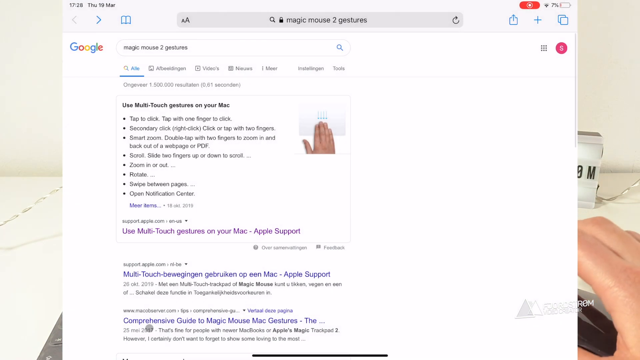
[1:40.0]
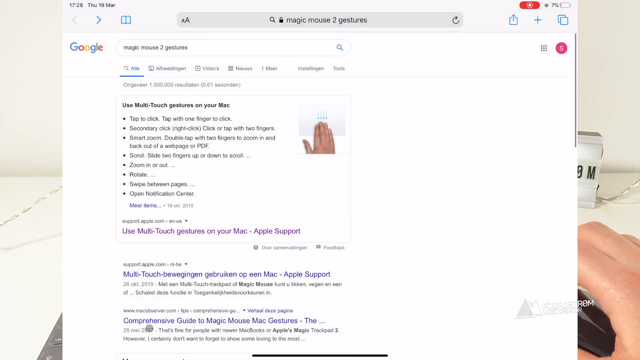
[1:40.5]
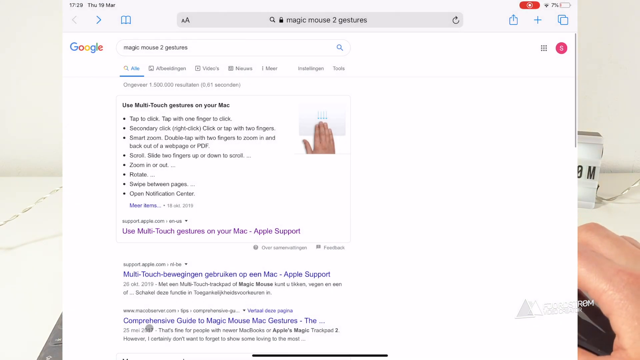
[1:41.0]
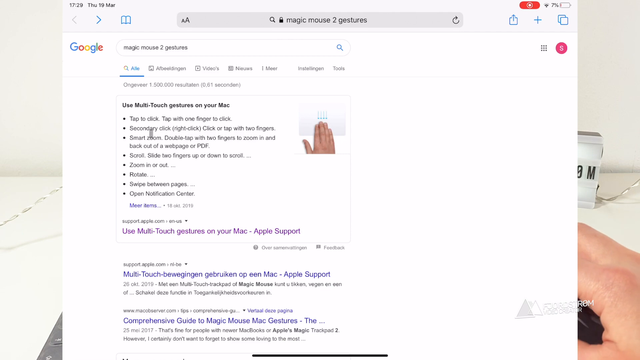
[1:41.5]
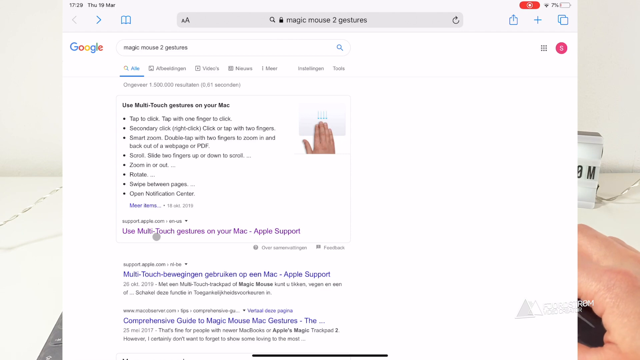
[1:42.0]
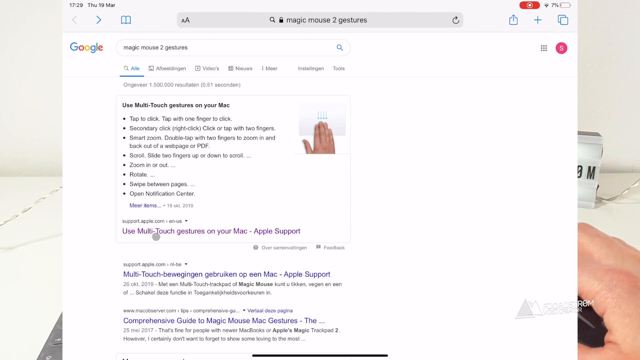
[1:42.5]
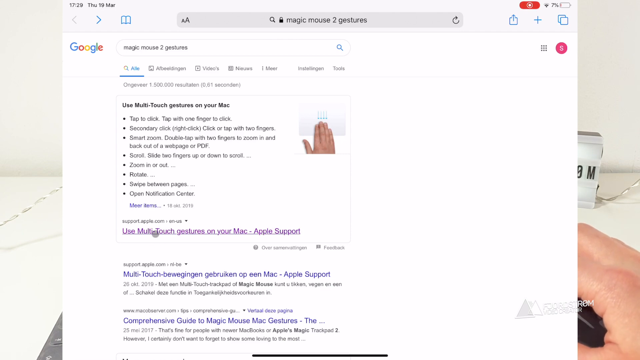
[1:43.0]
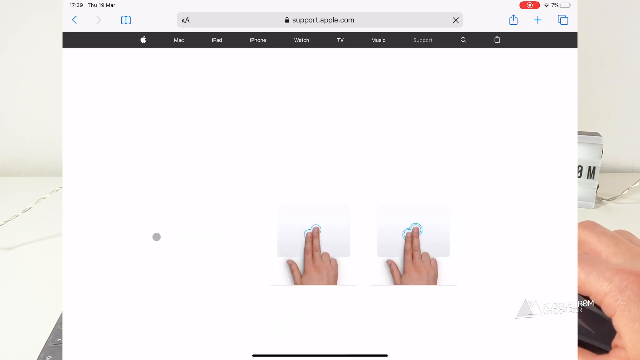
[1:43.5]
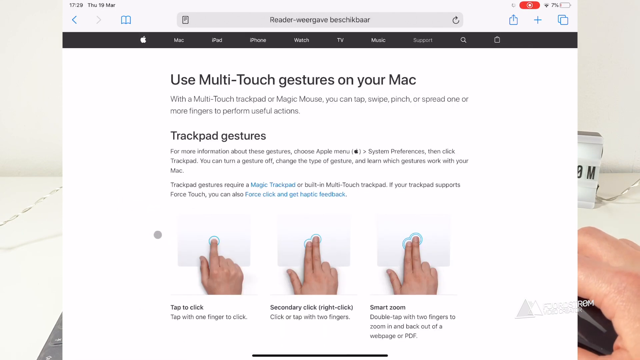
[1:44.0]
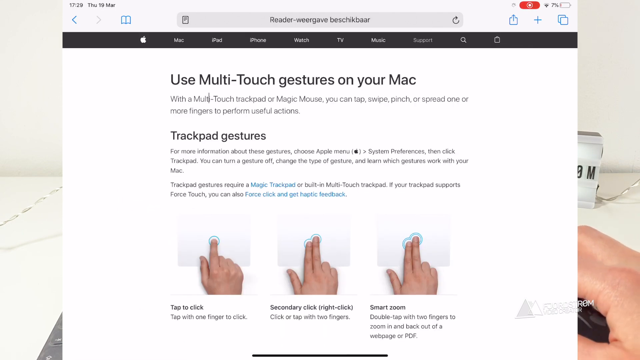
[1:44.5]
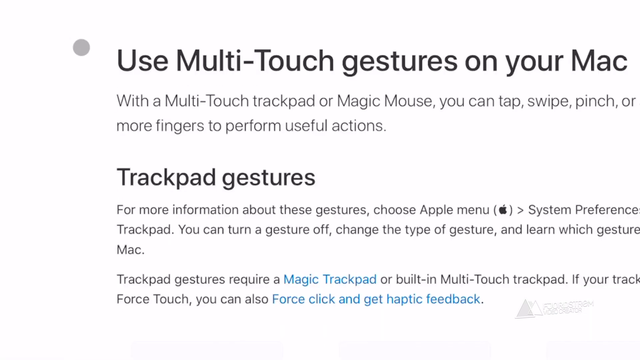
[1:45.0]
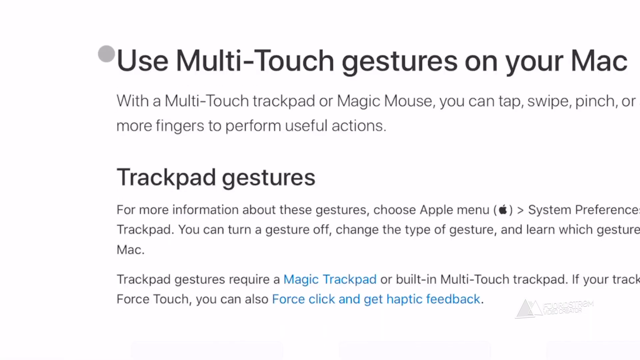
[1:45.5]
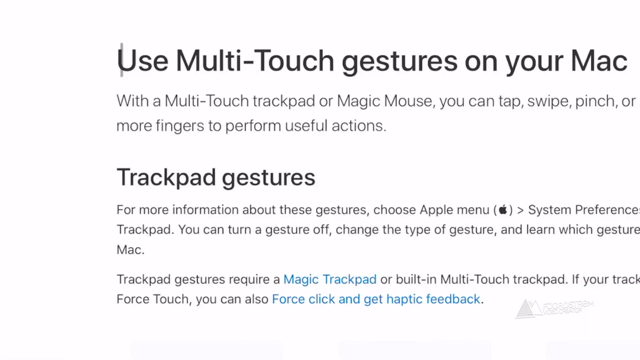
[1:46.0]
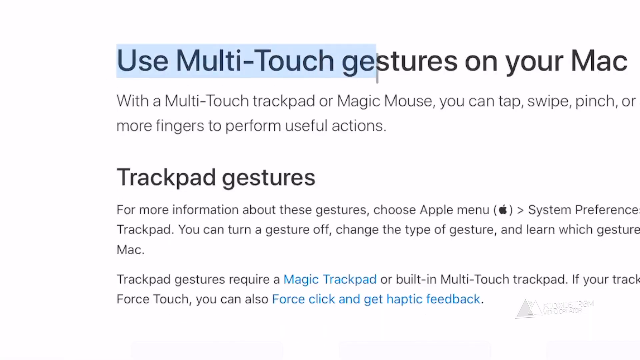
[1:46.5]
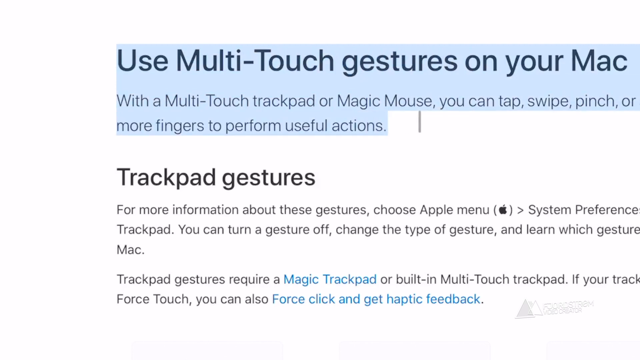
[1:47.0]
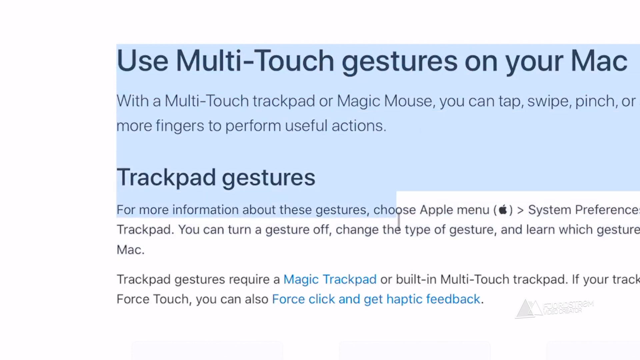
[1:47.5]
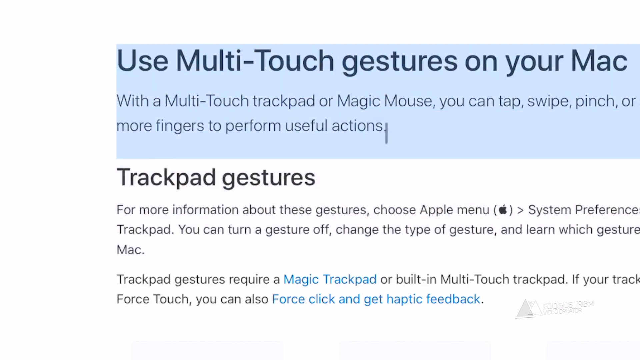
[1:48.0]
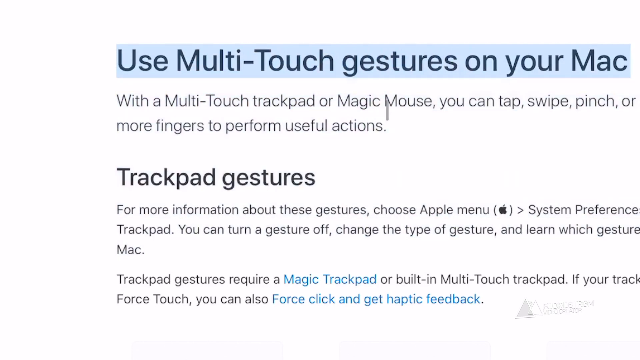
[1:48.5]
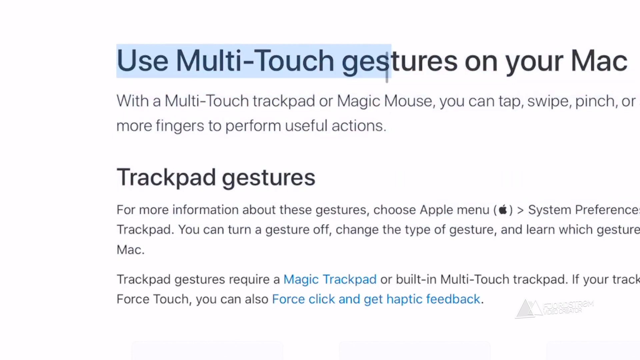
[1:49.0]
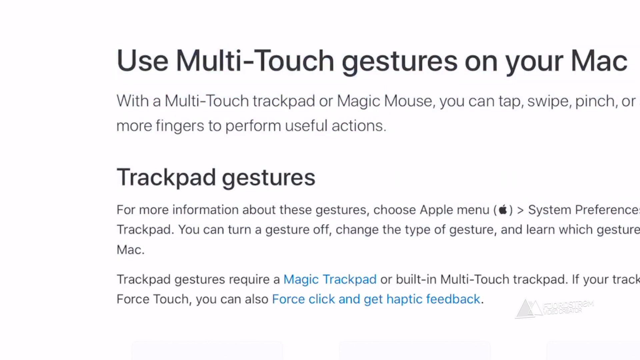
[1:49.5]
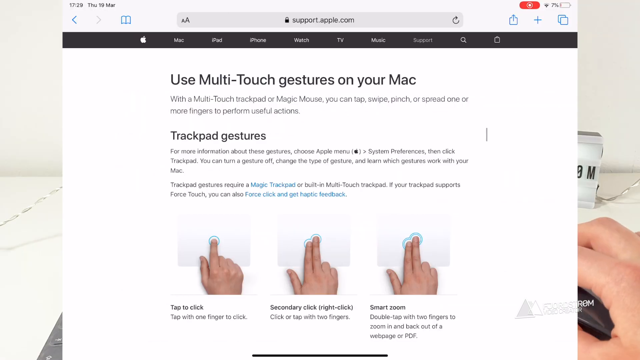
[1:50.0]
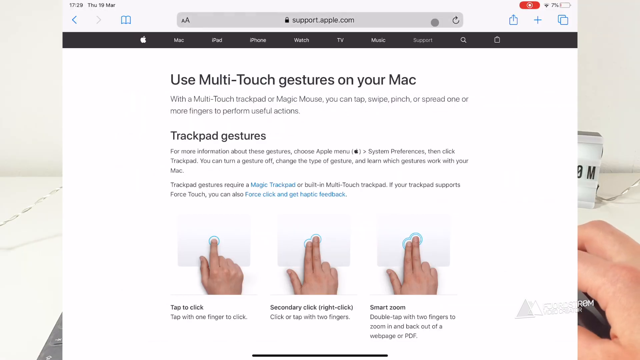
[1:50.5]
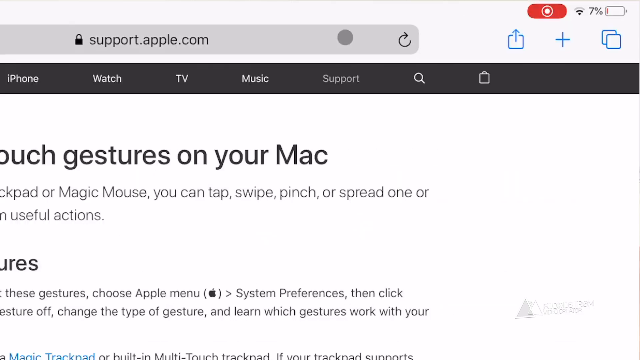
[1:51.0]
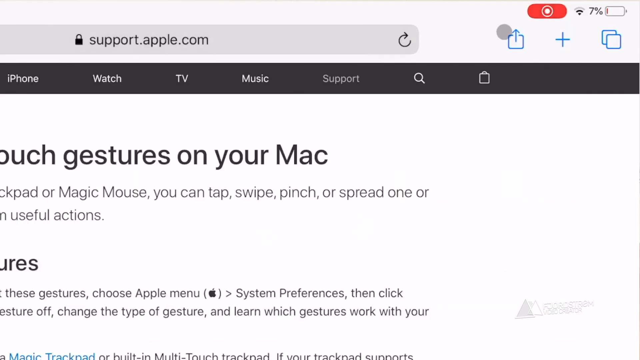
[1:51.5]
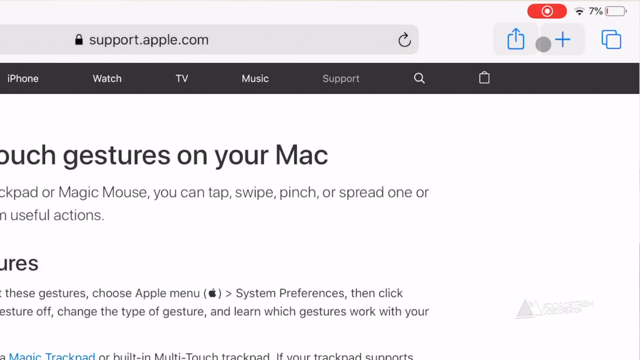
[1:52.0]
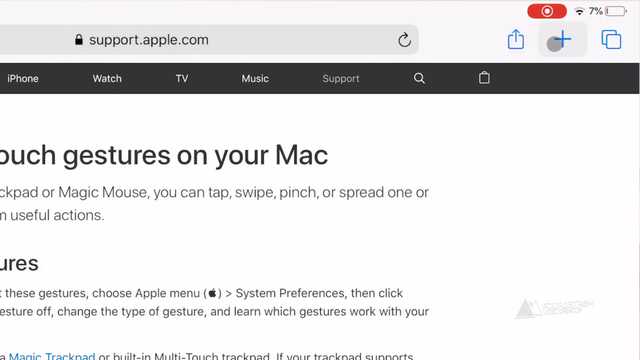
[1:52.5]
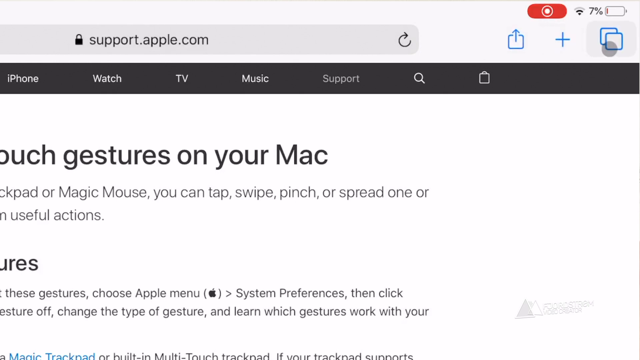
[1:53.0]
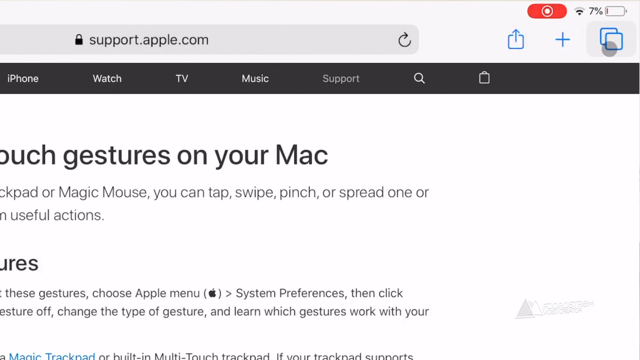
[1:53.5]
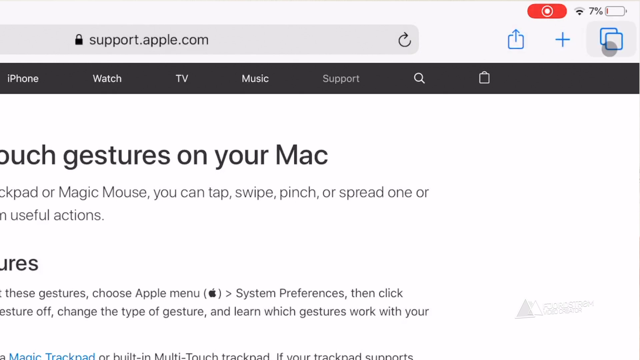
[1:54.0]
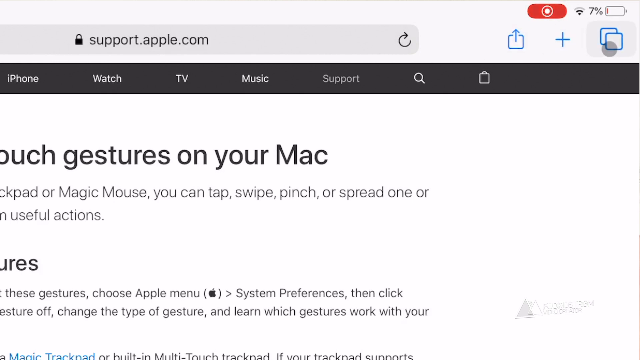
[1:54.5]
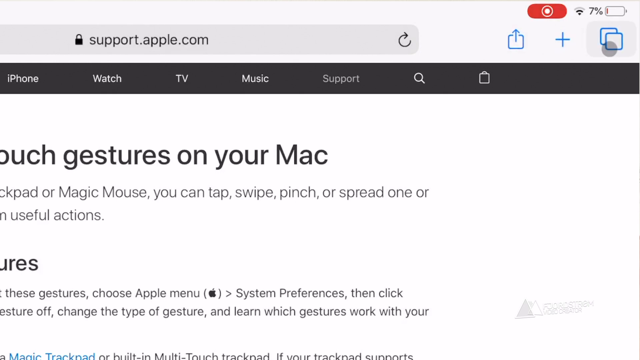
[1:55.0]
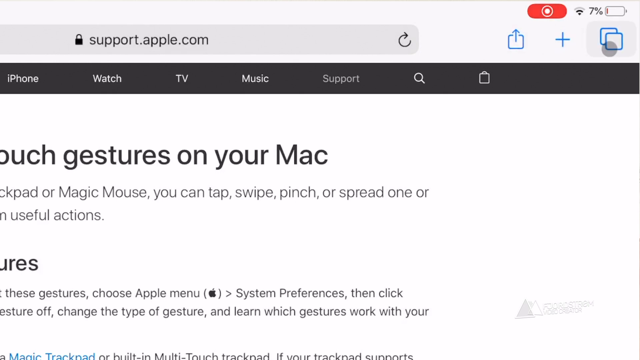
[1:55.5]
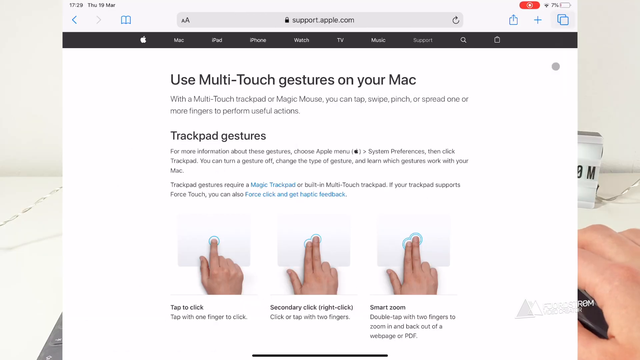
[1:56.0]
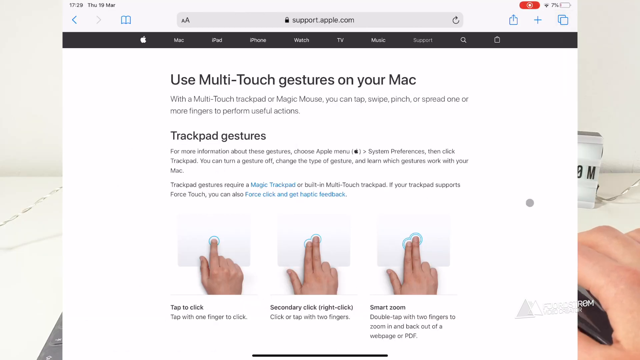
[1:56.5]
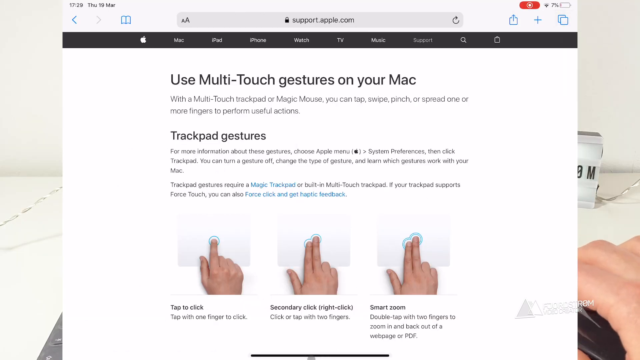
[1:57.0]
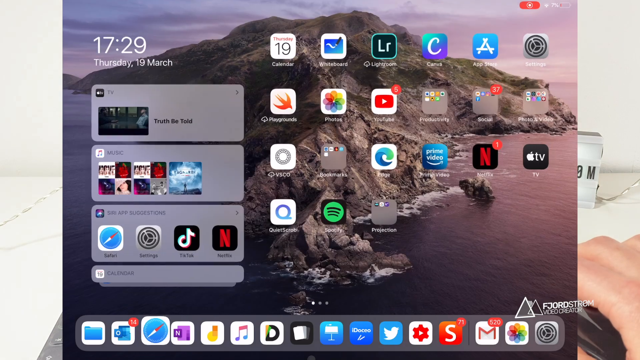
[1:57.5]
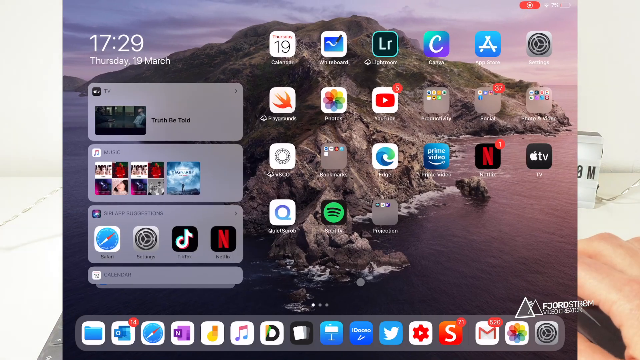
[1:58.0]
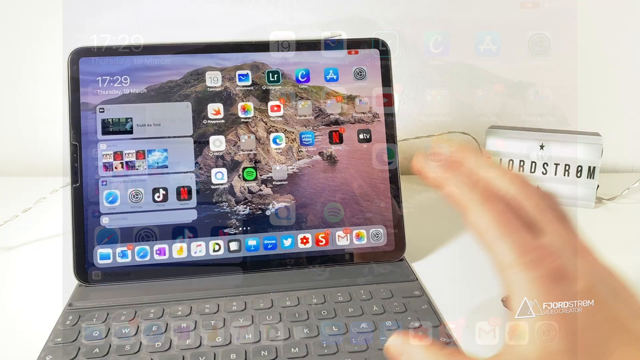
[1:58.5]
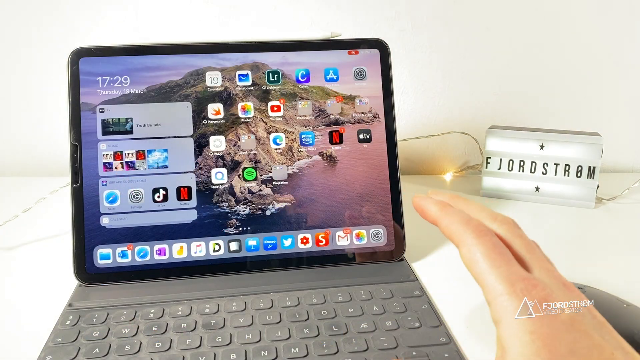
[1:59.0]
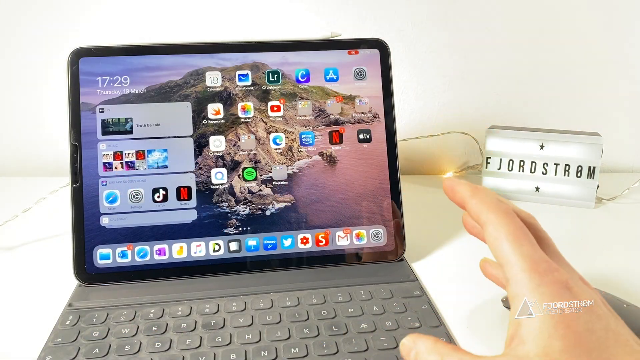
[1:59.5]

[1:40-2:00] A Google search for "Magic Mouse 2 gestures" shows results. One reads "use multi-touch gestures on your Mac," with information on how to do that: "tap to click, tap with one finger to click, secondary click, right click, click or tap with two fingers, smart zoom, double tap with two fingers to zoom in and back out of the web page or PDF," followed by scroll, zoom in or out, rotate, swipe between pages and open notification center. This result looks like it was previously opened, as it is a slightly different color from the other results. He moves over to it and clicks to open the page, which reads: "use multi-touch gestures on your Mac. With a multi-touch trackpad or Magic Mouse, you can tap, swipe, pinch or spread one or more fingers to perform useful actions. Trackpad gestures. For more information about these gestures, choose Apple menu system preferences and click trackpad. You can turn a gesture off, change the type of gesture and learn which gestures work with your Mac. Trackpad gestures require a Magic Trackpad or built-in multi-touch trackpad. If your trackpad supports force touch, you can also force click and get haptic feedback." He appears to zoom in on one area, highlights some of the text, goes further down and then back up. He goes to the search bar area and hovers over some settings to its right, including a box that looks like the copy function. He scrolls his mouse back down and minimizes the Safari browser, leaving the main computer screen, then talks and moves his hands.